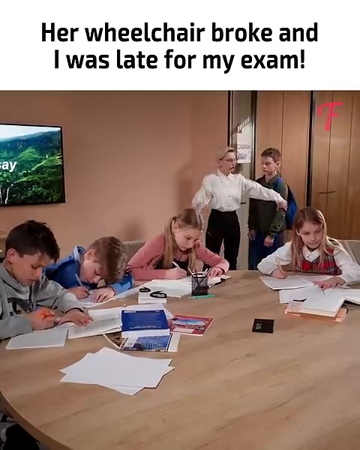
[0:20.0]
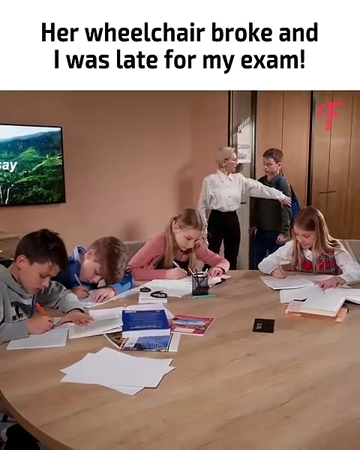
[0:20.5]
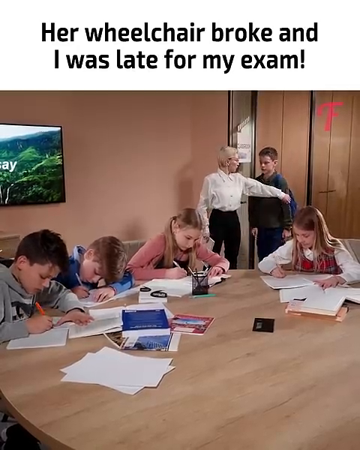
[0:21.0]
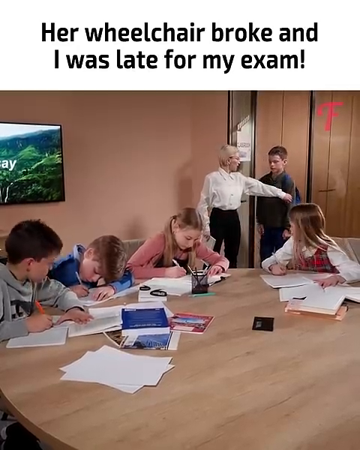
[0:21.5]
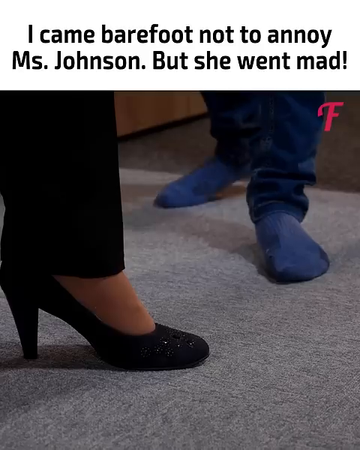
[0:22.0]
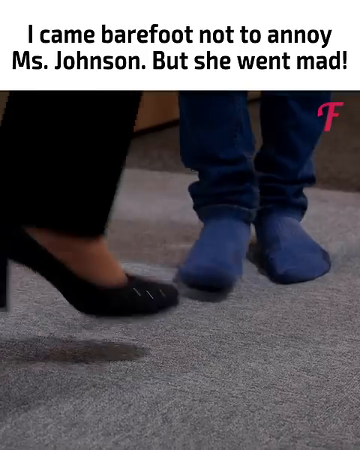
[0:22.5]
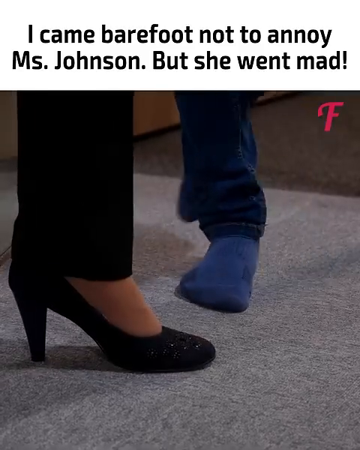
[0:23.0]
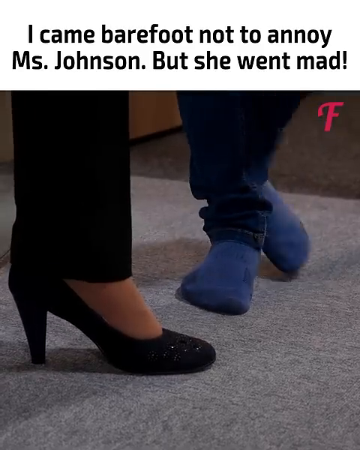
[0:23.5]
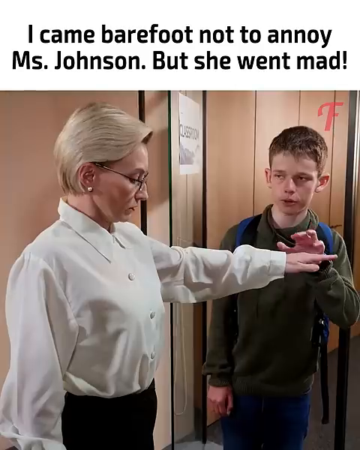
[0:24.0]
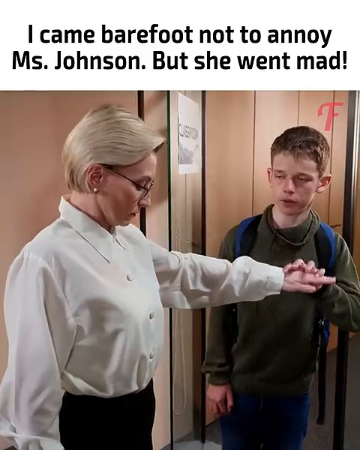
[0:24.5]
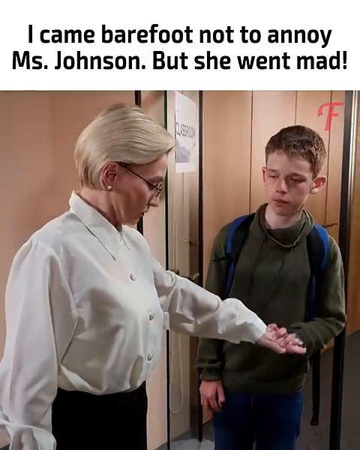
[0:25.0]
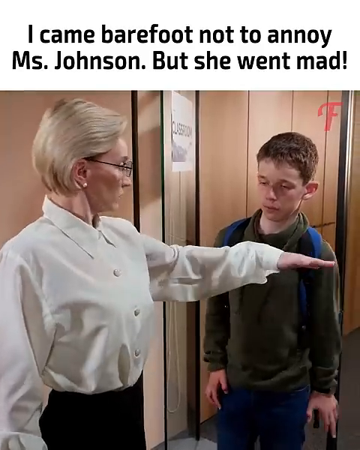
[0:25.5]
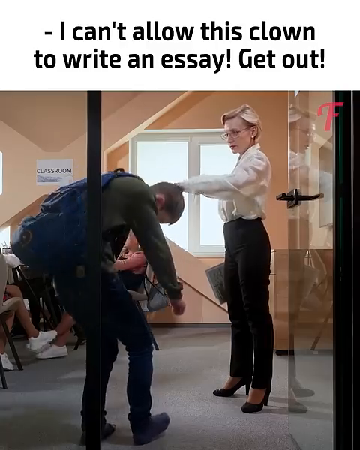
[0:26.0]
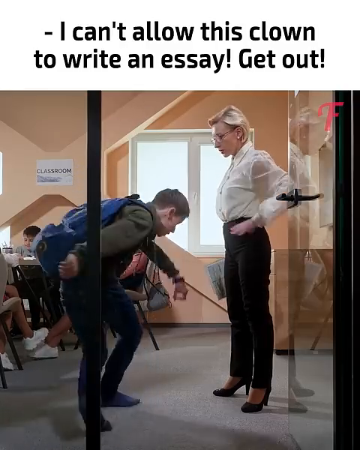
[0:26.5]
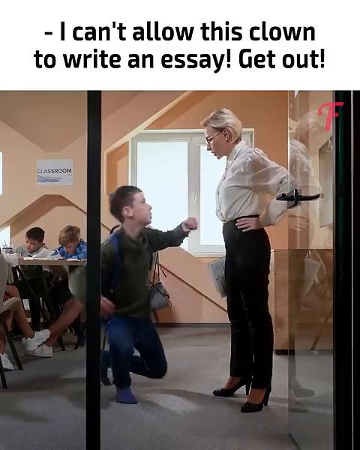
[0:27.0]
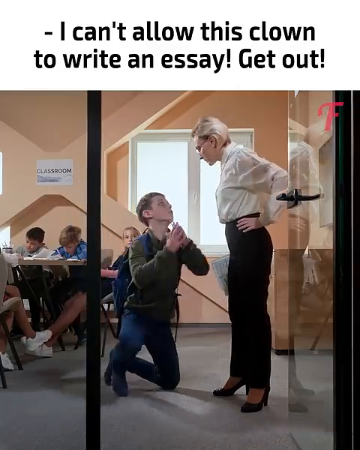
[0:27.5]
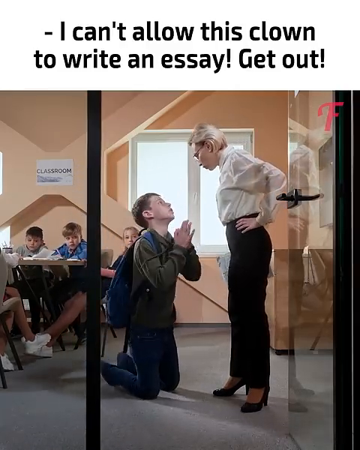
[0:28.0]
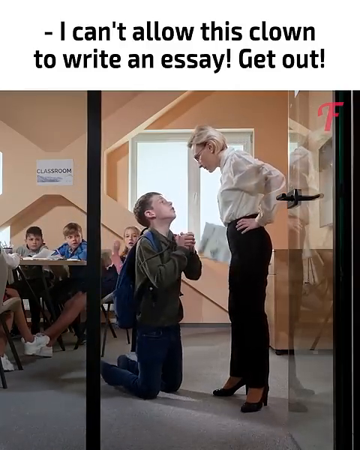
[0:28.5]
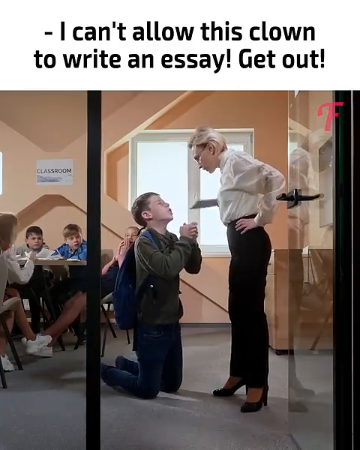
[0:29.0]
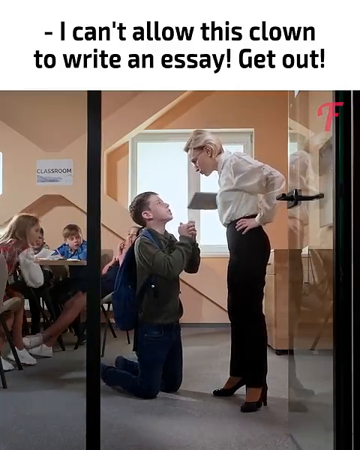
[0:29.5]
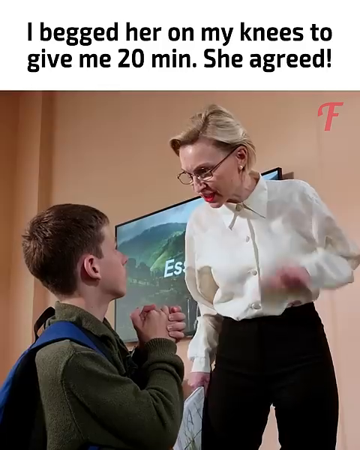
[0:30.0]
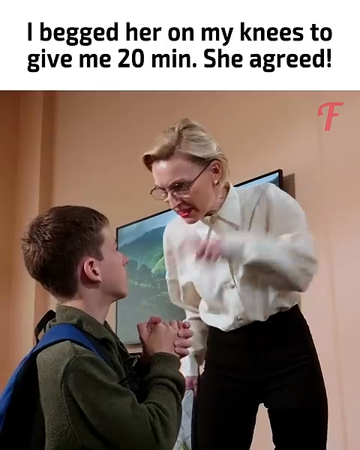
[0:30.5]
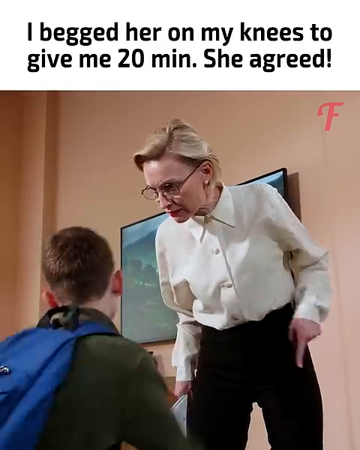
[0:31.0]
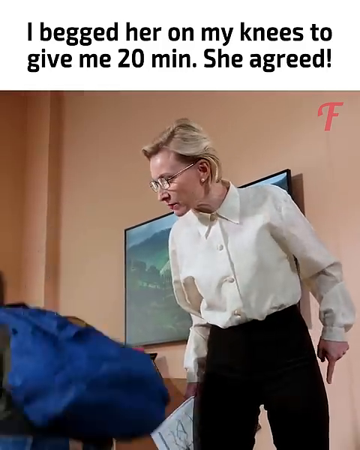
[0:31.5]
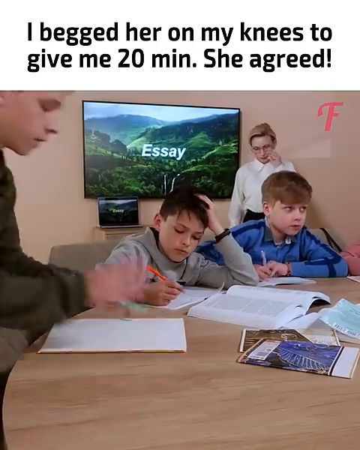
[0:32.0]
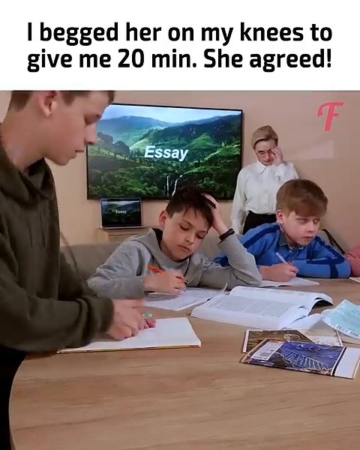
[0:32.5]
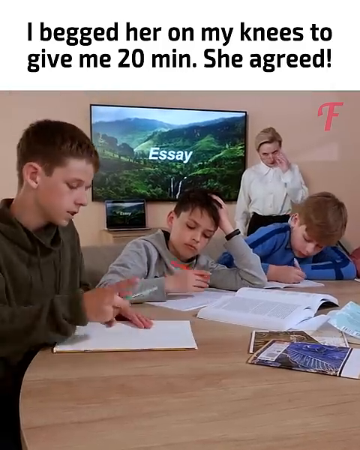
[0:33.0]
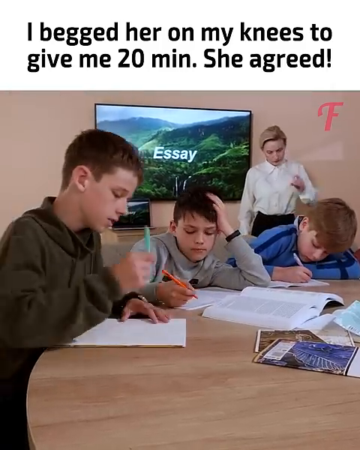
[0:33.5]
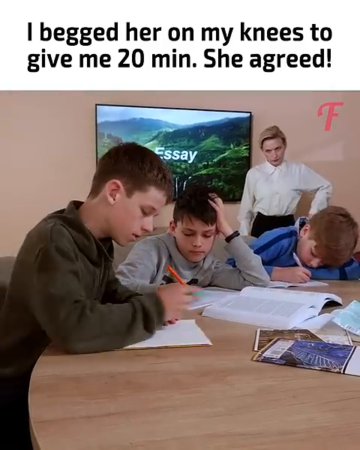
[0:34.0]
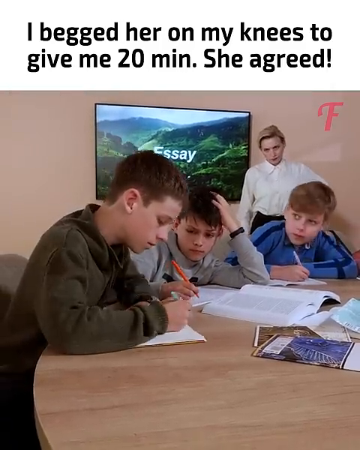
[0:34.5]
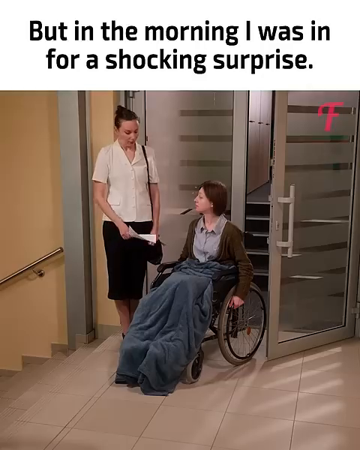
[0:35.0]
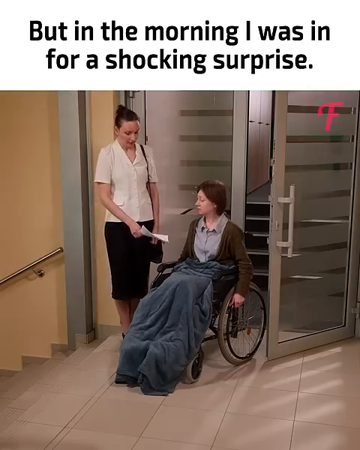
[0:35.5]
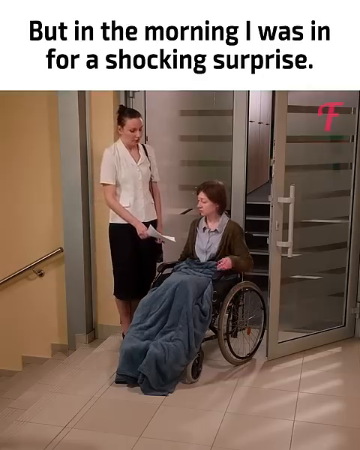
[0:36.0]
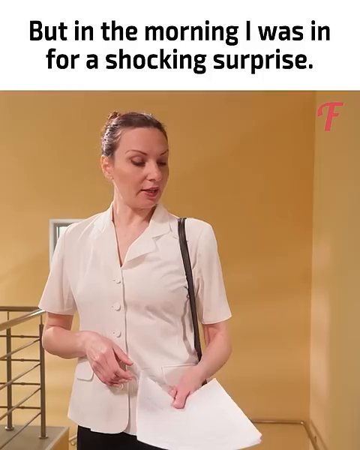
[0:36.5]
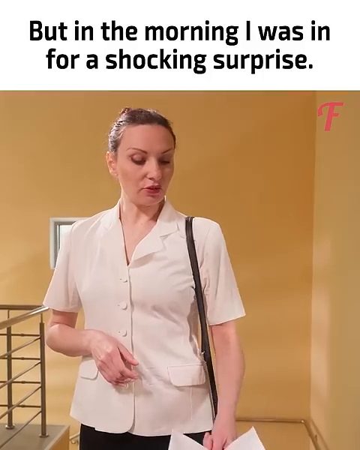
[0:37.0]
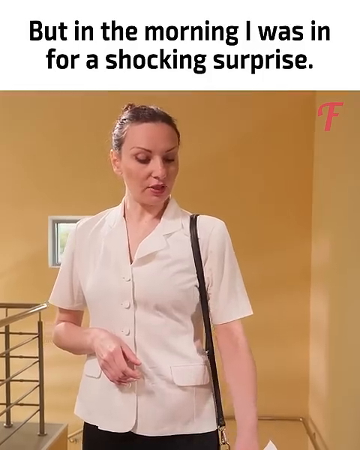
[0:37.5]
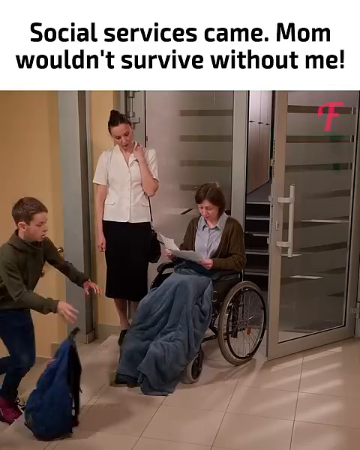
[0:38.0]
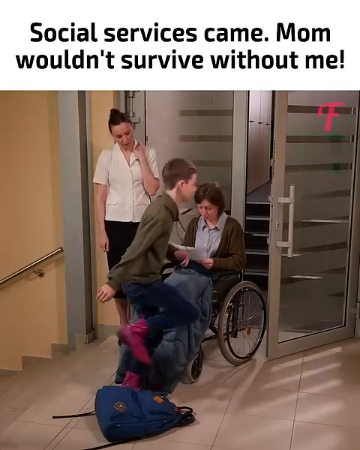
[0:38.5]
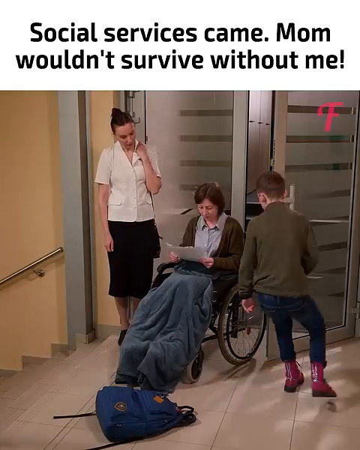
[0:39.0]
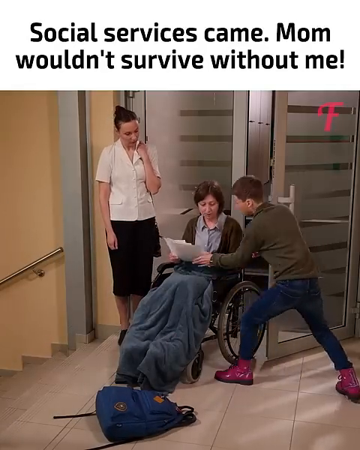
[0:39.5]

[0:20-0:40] The woman stops the kid from entering the classroom, and he looks a little shocked. He is not wearing any shoes. He slowly puts his hand on her arm and tries to move it down, and she looks angry. He goes down on his knees and begs the teacher while she gestures very angrily and says something to him. A TV in the background shows the word "essay" with text on a very nature-like background. He slaps down his notebook and immediately starts writing. The scene moves to the woman in the wheelchair, who has a blanket on and appears to be talking to a nurse or someone similar. The boy comes back into the scene and runs up the stairs enthusiastically. A woman who is some sort of nurse or a businesswoman has given the woman in the wheelchair some papers showing test results, and the kid runs up and tries to read them.